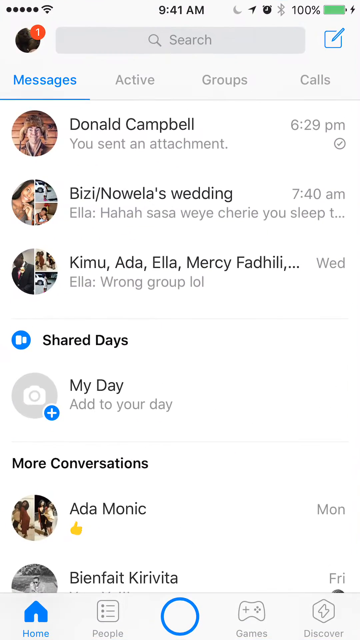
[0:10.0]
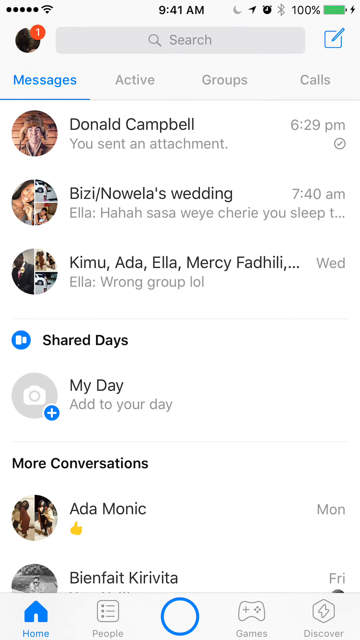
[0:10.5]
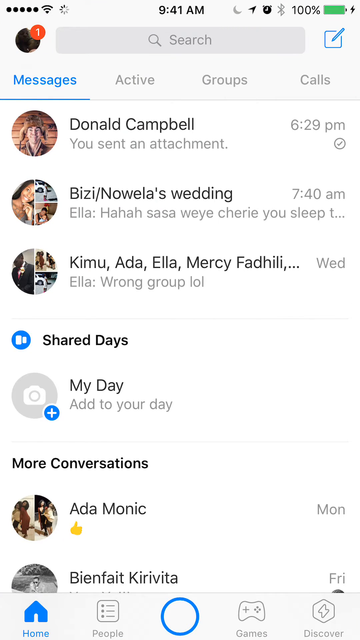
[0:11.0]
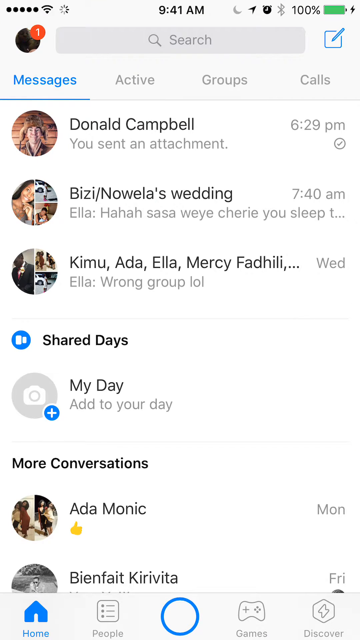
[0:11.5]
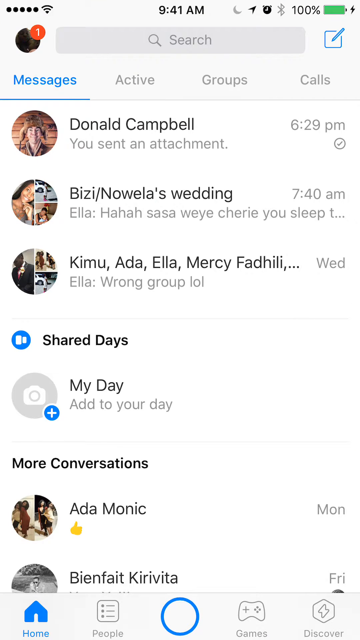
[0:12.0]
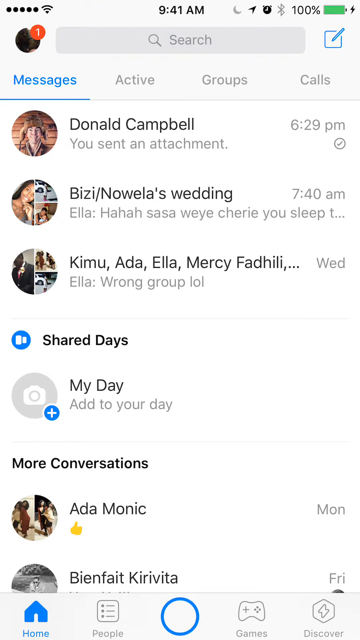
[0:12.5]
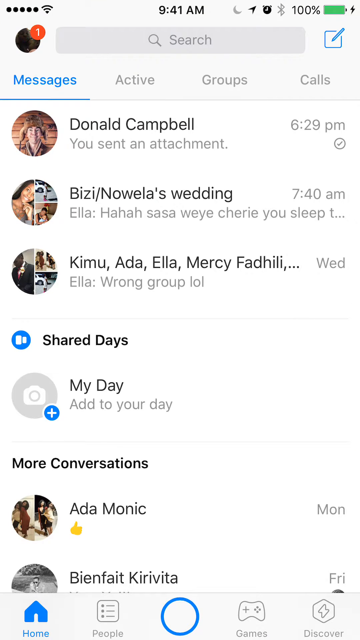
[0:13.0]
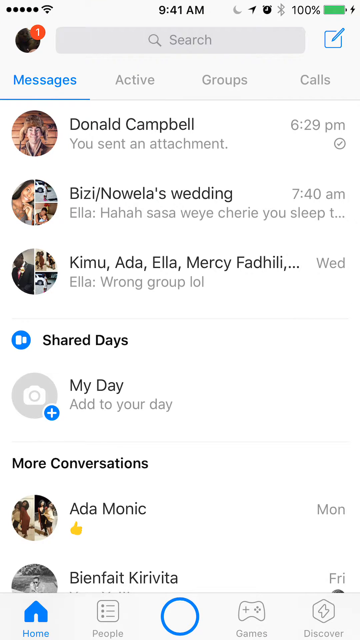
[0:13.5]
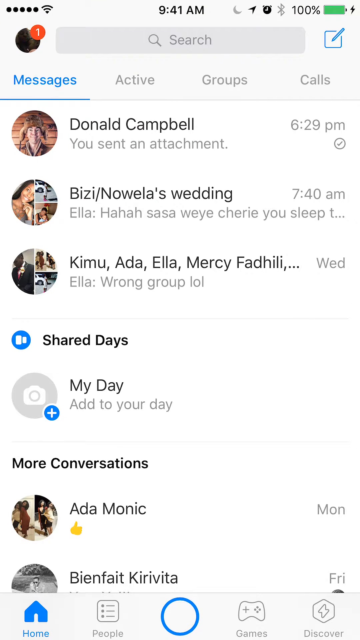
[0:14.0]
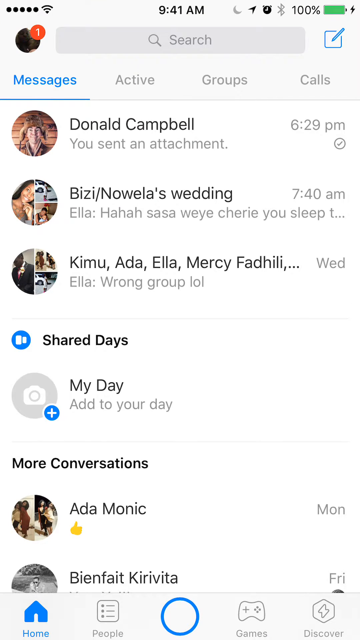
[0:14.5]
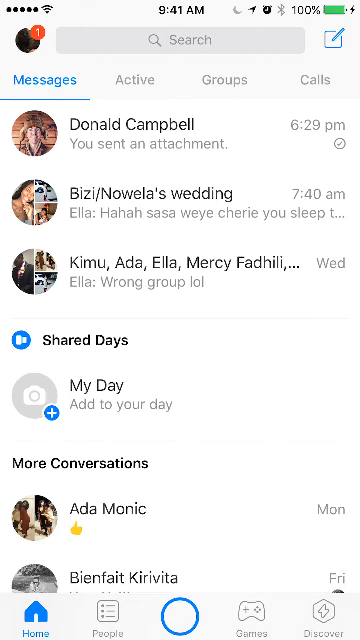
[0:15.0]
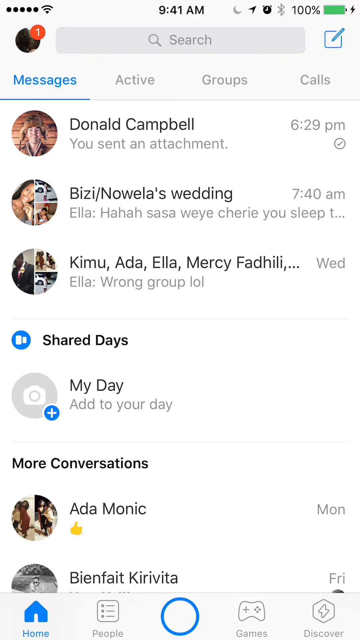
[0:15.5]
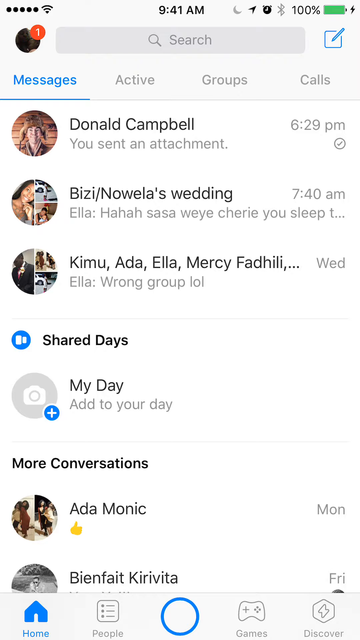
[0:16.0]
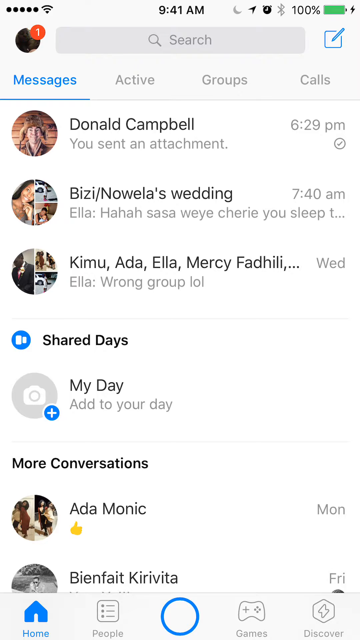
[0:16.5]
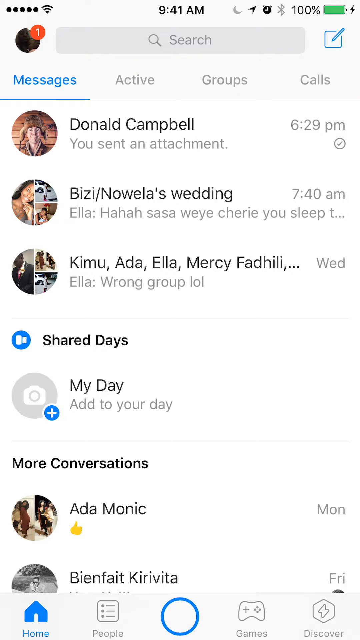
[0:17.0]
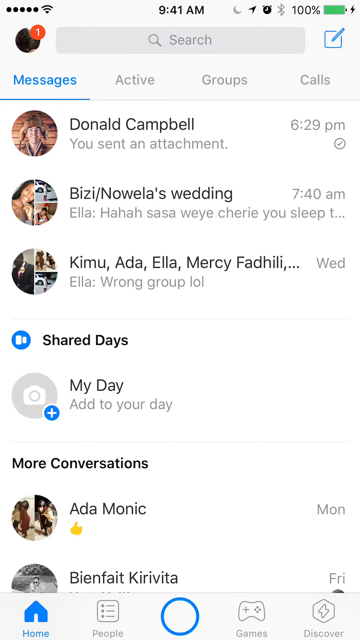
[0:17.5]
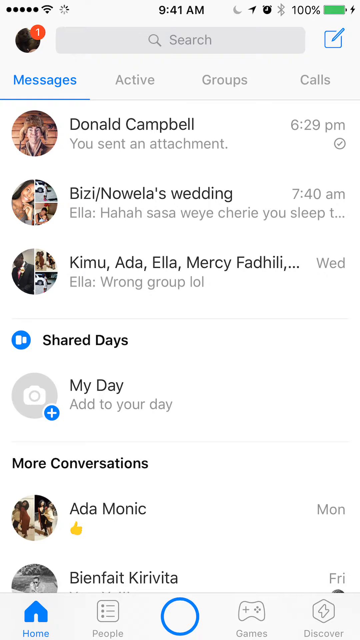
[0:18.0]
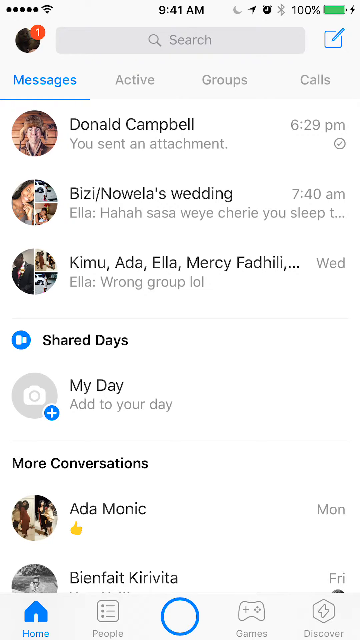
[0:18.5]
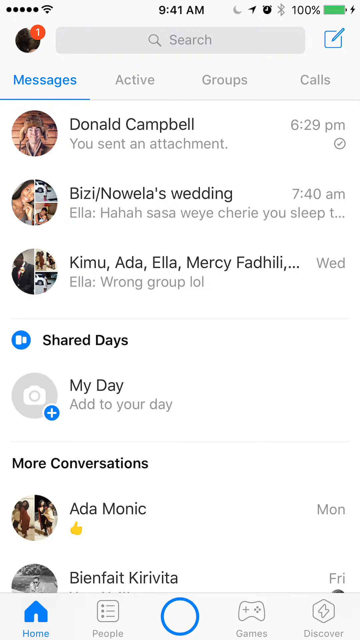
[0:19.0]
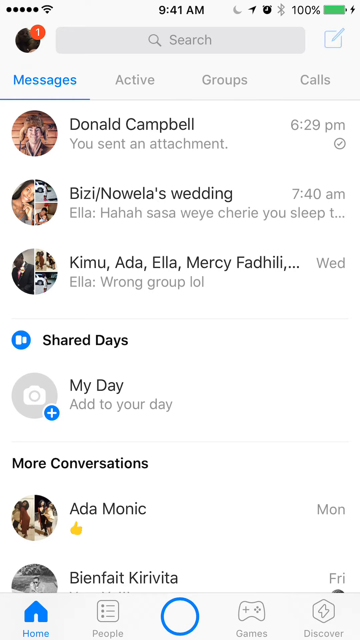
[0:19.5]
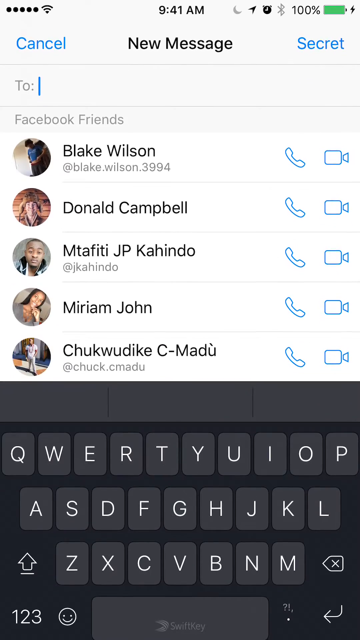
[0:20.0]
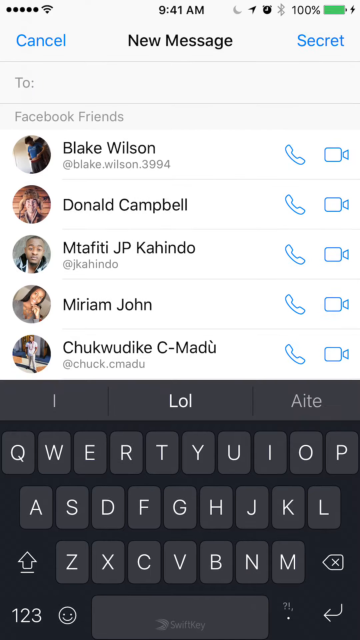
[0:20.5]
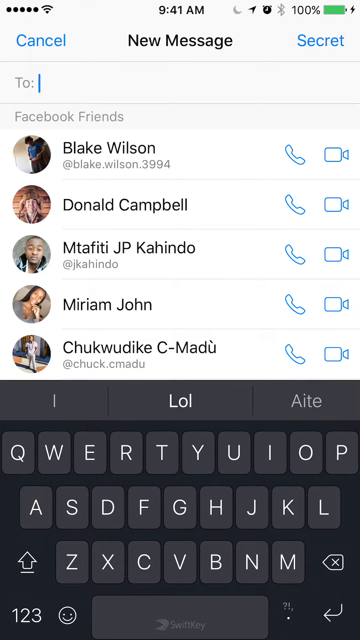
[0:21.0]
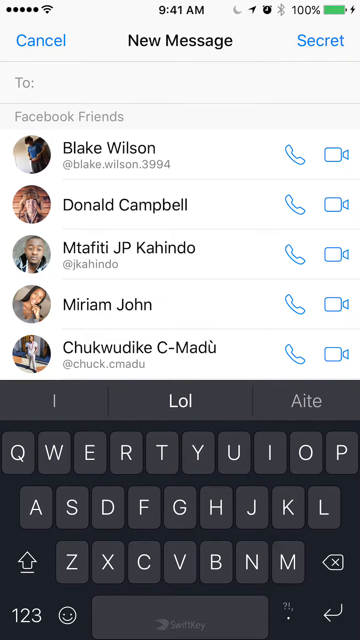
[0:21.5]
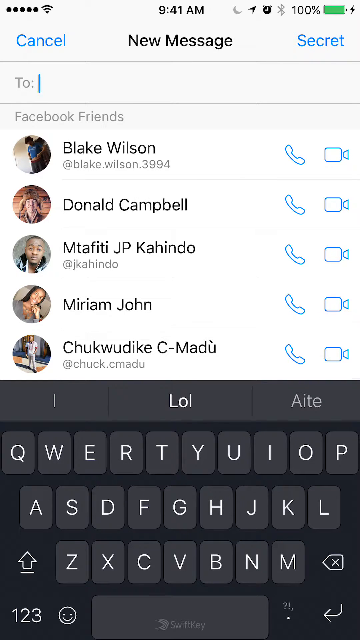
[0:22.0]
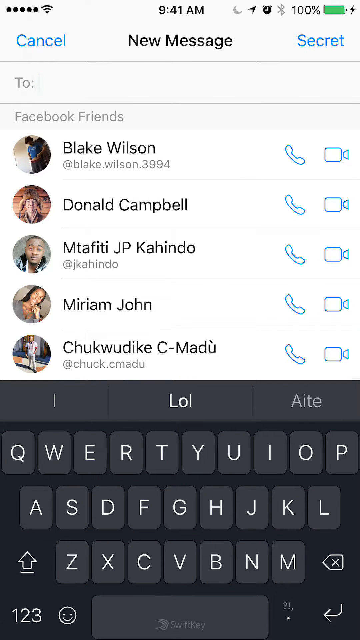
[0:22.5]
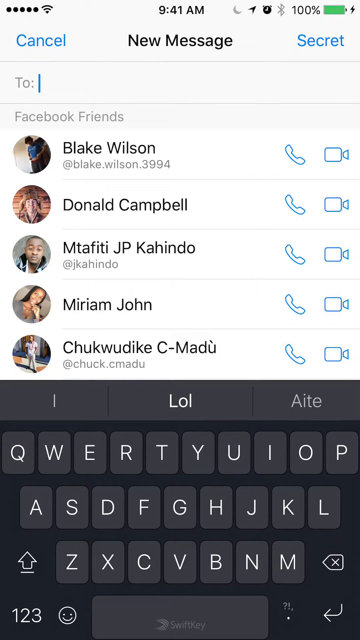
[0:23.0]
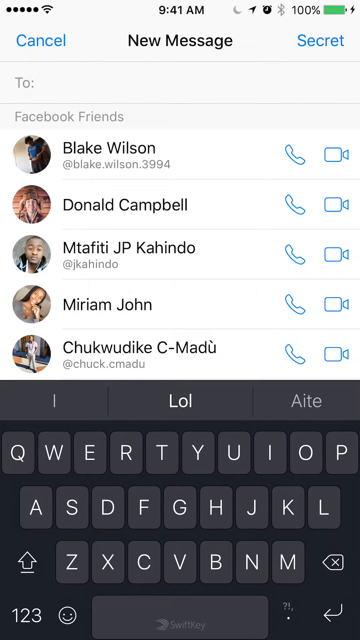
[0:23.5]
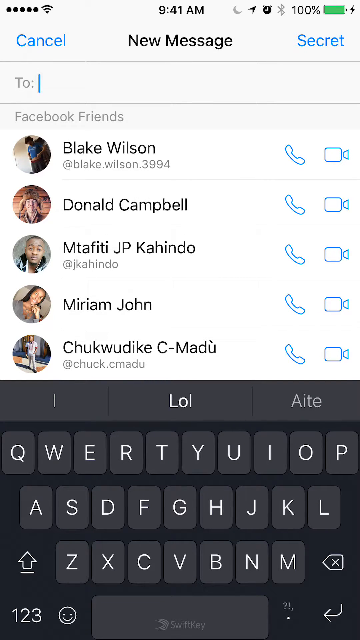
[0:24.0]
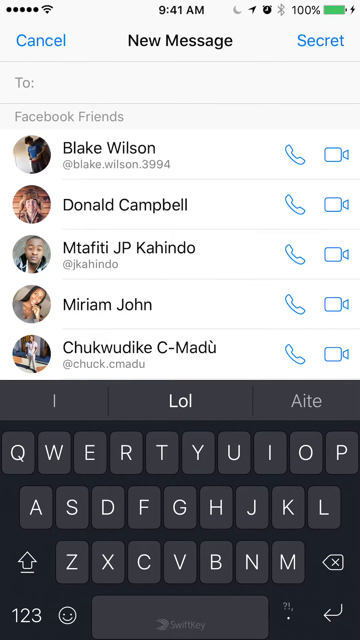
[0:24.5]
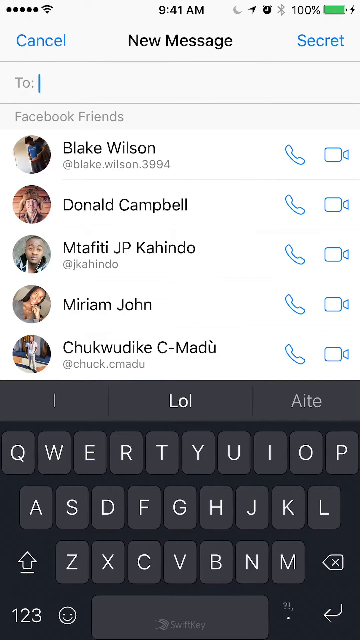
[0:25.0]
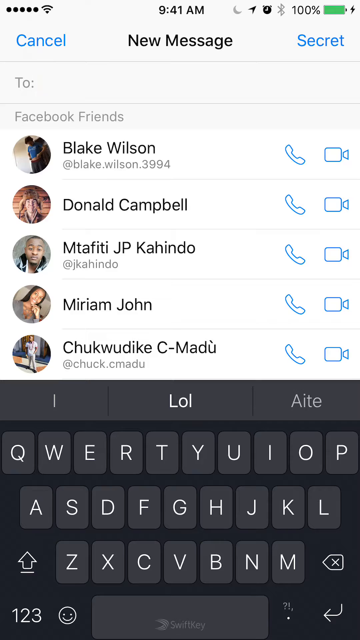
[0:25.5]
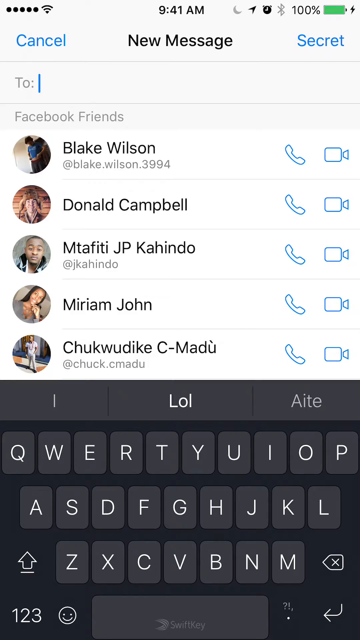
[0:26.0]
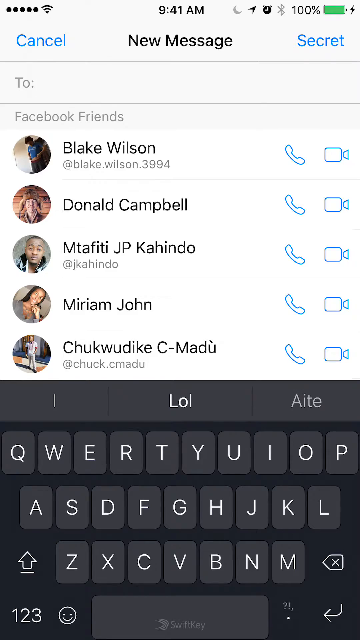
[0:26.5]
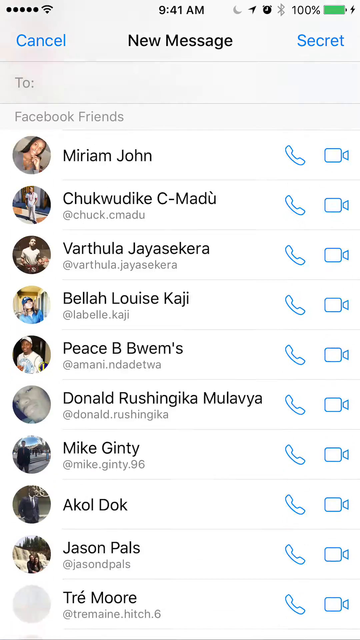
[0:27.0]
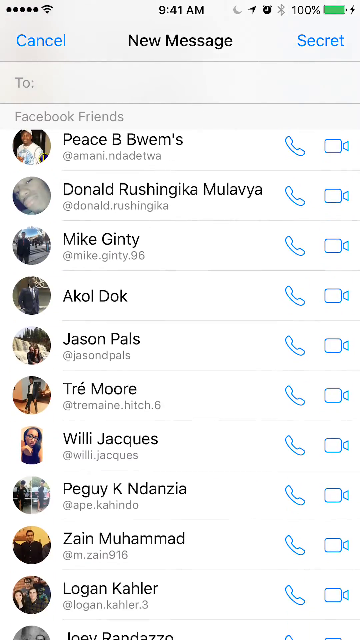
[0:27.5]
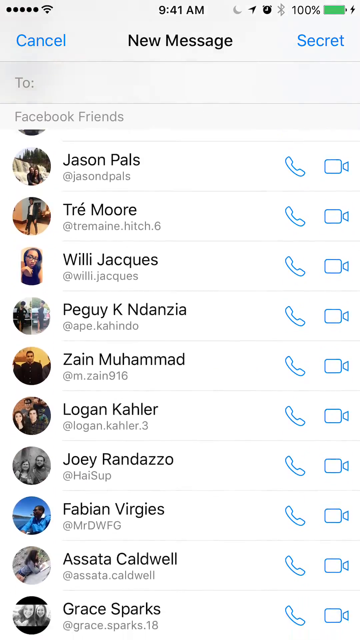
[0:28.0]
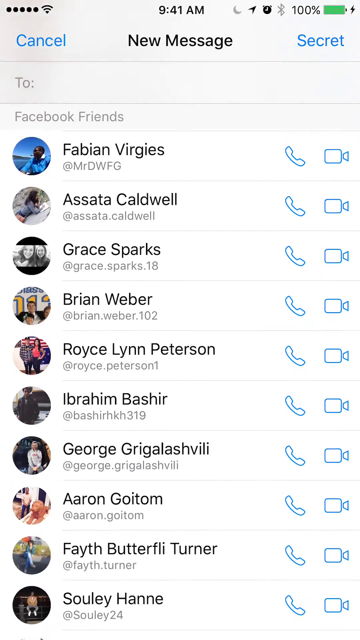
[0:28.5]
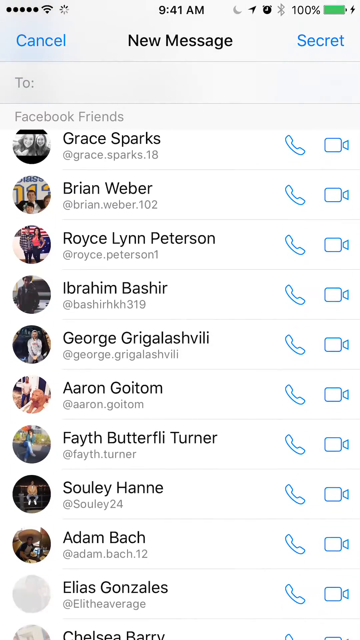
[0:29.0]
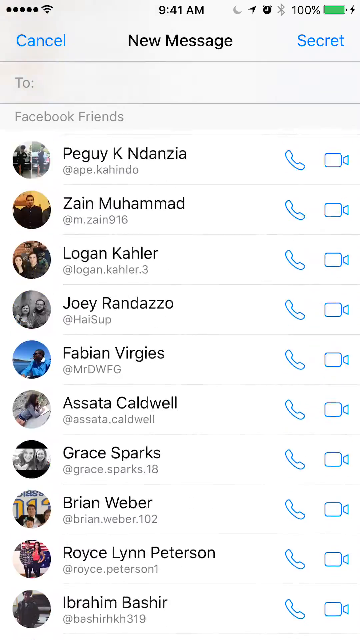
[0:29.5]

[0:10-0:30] What looks like an iPhone screen capture shows an app with four tabs at the top reading "messages", "active", "groups" and "calls". There appears to be a search bar at the top and an edit button on the right side. Names such as Donald Campbell, Busy, Noella's Wedding, Kimu, Ada and Aya are listed, followed by shared days, my day, and more conversations at the bottom. The compose/edit button at the top right, next to the search bar, appears to be tapped, and a keyboard comes up from the bottom. A cancel button appears at the top left and a secret button at the top right, with "new message" shown, along with a to input field. Below it is a long list of names, including Blake Wilson, Donald Campbell, Matafti, J.P. Hindo, Miriam, John and Chukwudlikisimadu. The to field has a blinking text cursor, but the user apparently taps out of it and starts scrolling down through the names, further and further. On the right side of each name are a blue telephone symbol and a blue video call symbol.